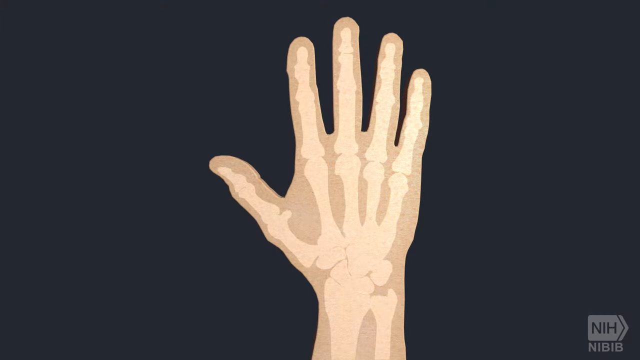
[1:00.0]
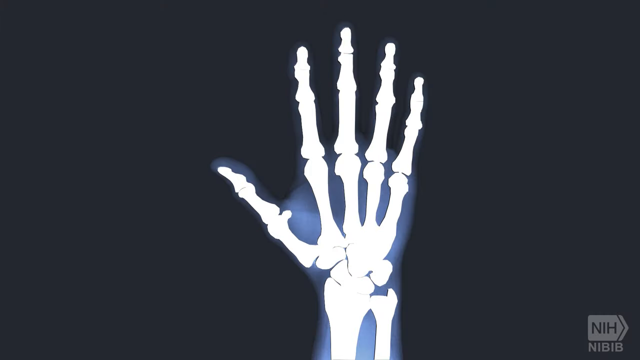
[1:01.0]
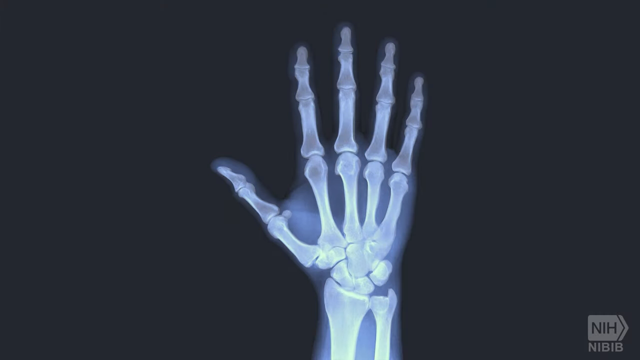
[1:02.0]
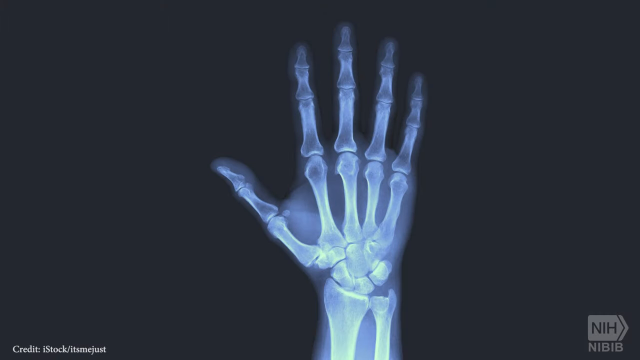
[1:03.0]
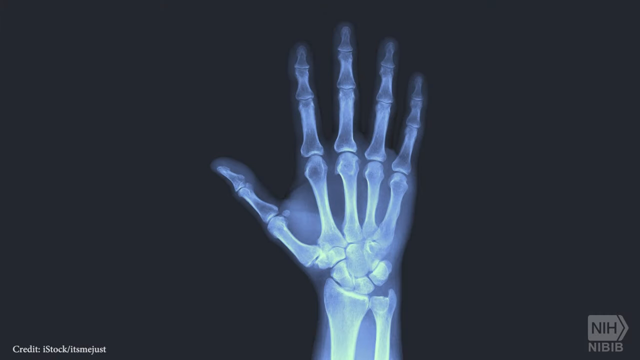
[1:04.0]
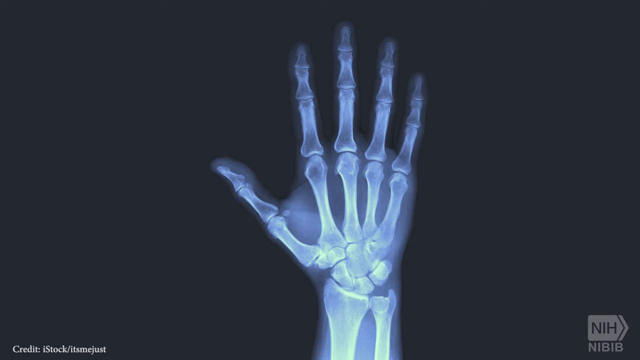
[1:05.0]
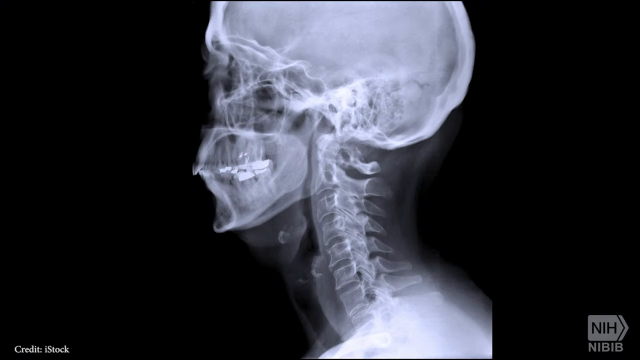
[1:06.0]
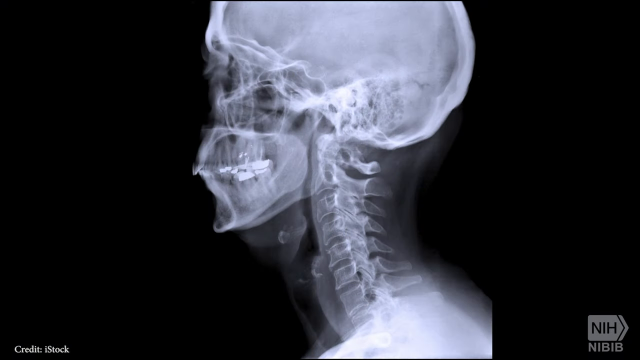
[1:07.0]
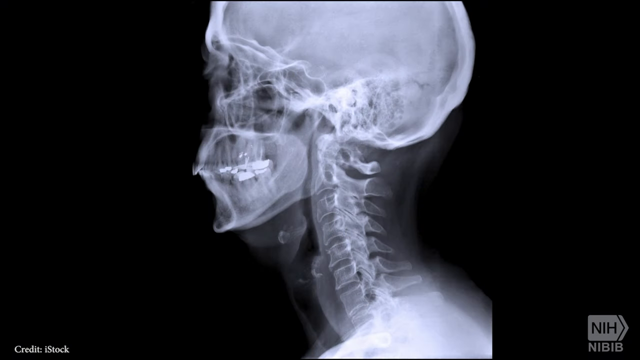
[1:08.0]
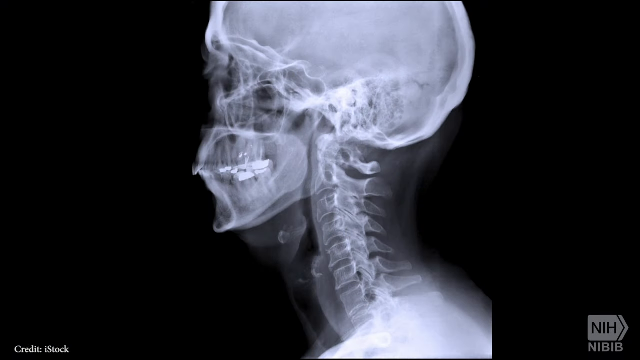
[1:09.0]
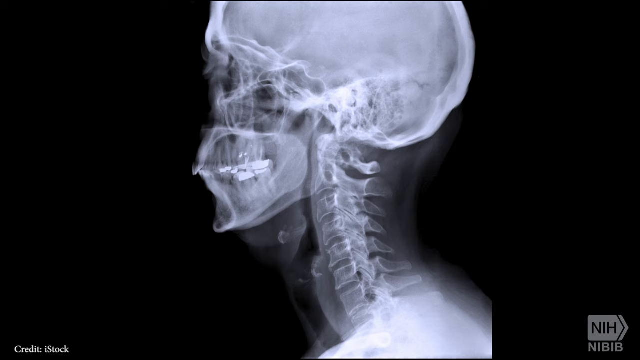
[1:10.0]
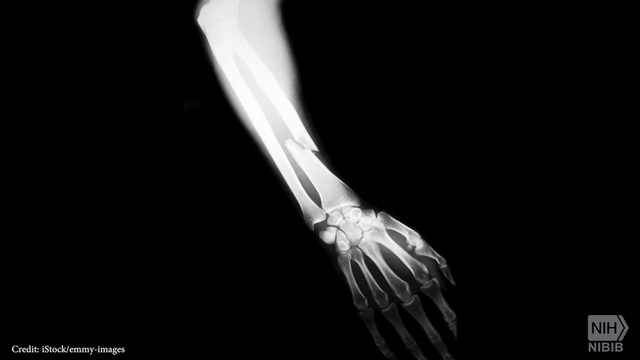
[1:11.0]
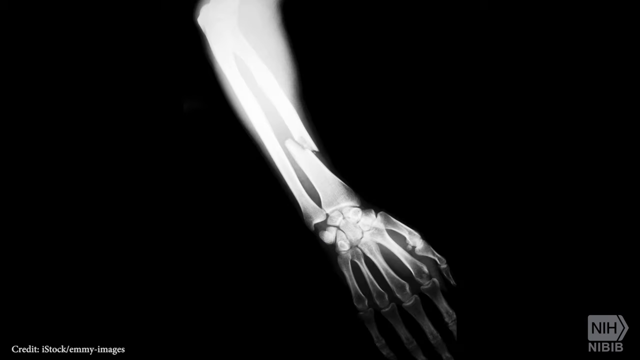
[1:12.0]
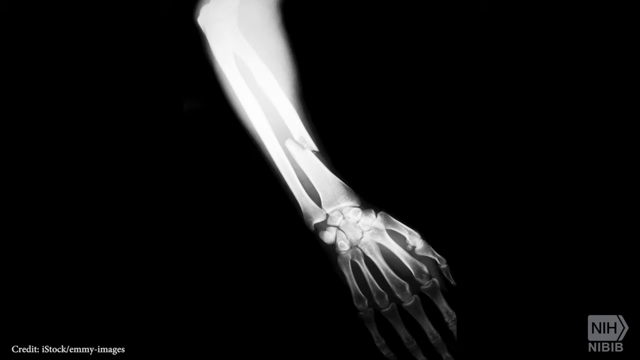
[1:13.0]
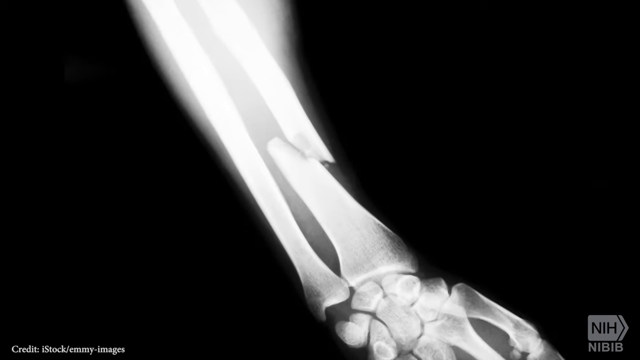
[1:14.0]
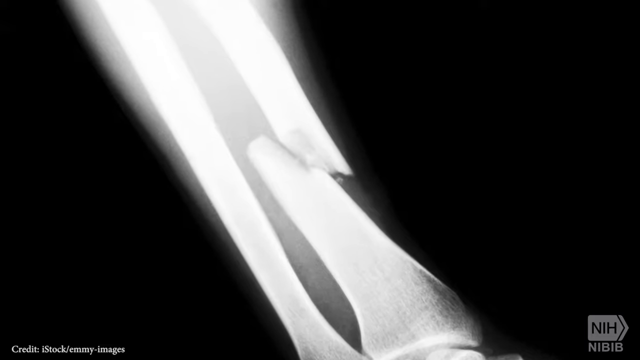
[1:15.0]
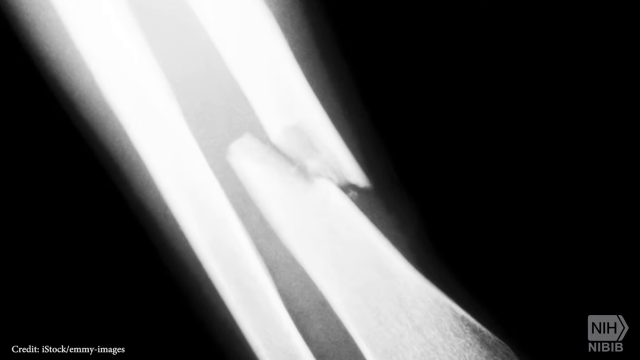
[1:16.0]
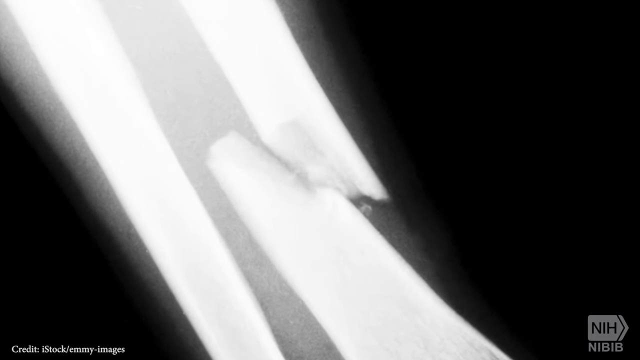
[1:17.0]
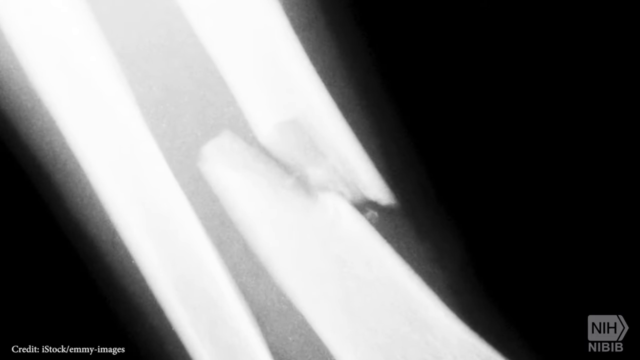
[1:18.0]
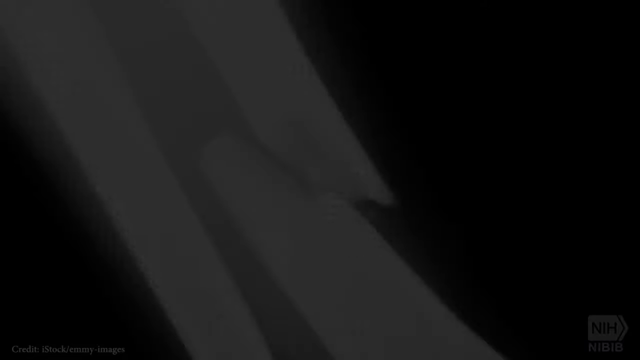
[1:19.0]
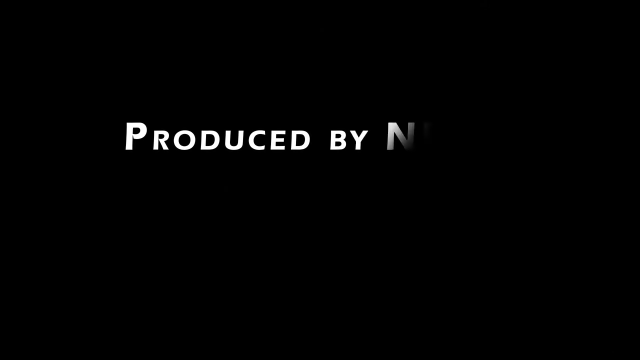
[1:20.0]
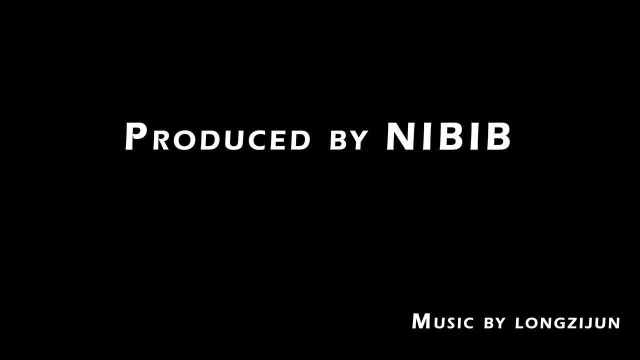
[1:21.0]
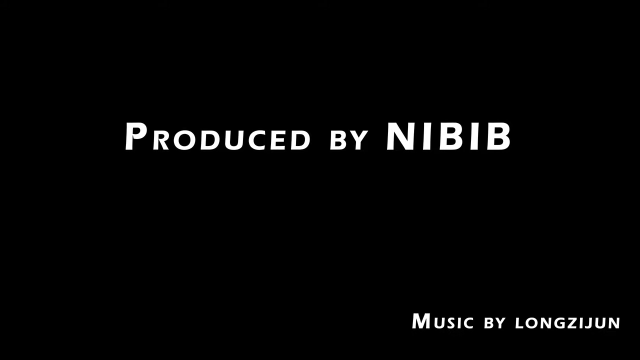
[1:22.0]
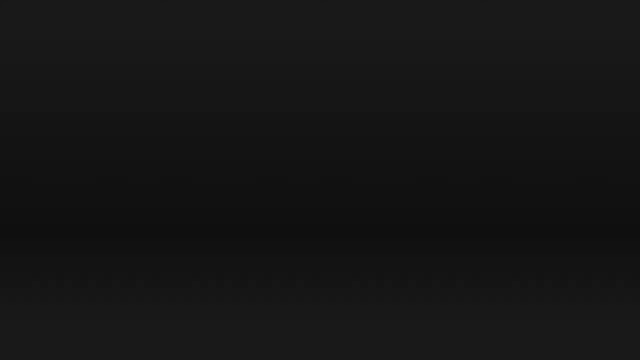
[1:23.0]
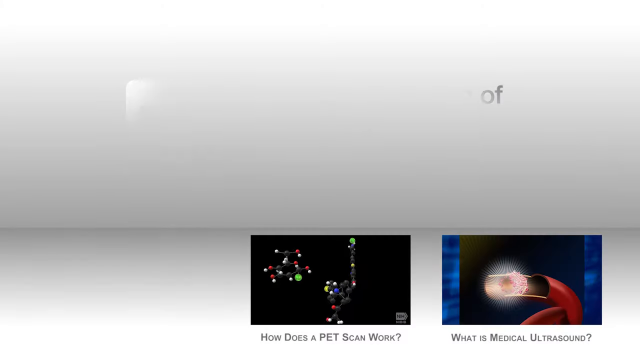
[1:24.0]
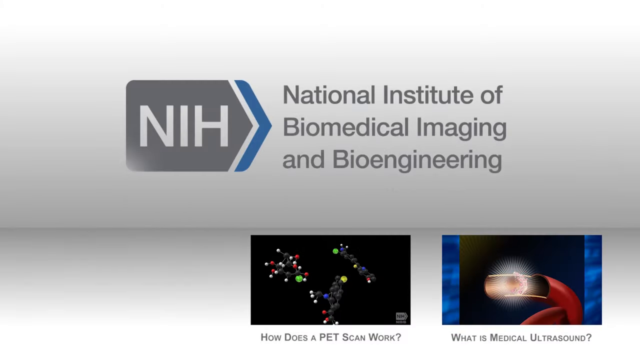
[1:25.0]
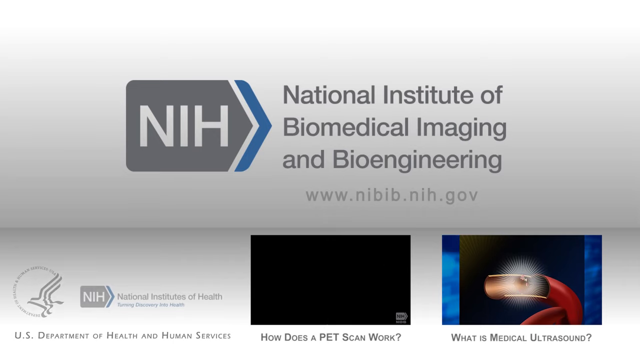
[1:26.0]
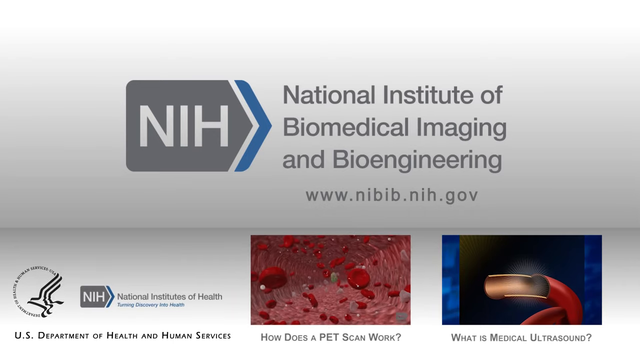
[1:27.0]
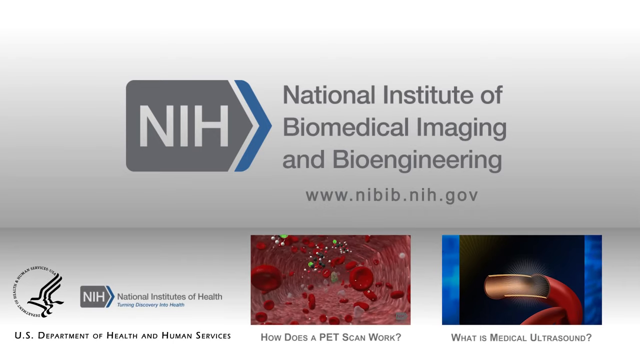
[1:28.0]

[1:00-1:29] A Caucasian human hand is shown with slightly translucent skin, faintly revealing the shape of the bones within it. The skin slowly fades to become completely translucent, revealing solid white bone structures, all against a dark gray background. The hand then switches to an x-ray-like image, making the bones slightly more translucent and revealing more detail in their structure and shape. The image transforms into a side-view x-ray of a human from about the cervical vertebra up, kind of blurry around the mouth and the eyes of the skull. The video shifts to an x-ray of someone's lower arm and part of the hand, revealing a break in the radius on the medial side, and zooms into the break. A black screen then shows "produced by NIBIB", followed by a white screen with the NIH logo reading "National Institute of Biomedical Imaging and Bioengineering" along with the website. Below is a digital recreation of blood cells floating in what seems like a vein, and to the right of it another clip shows what looks like part of an artery or a vein.